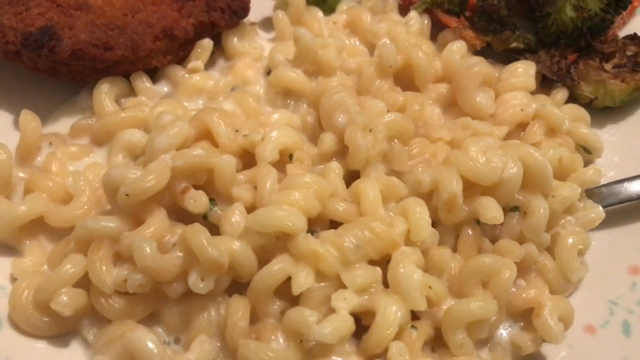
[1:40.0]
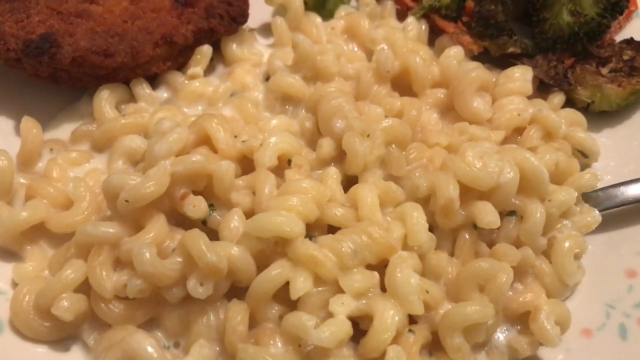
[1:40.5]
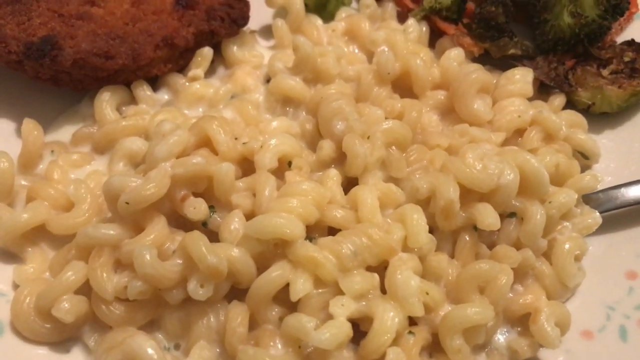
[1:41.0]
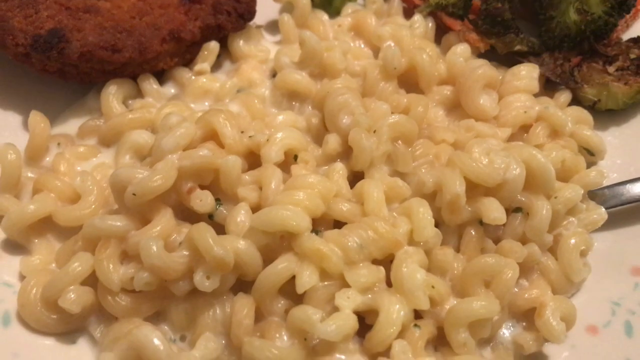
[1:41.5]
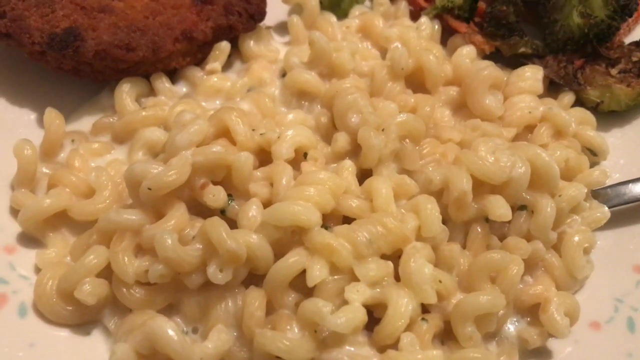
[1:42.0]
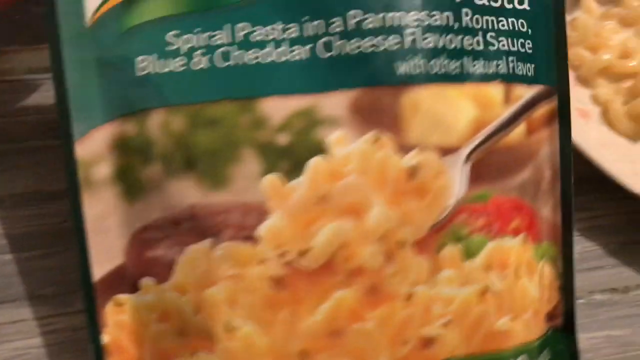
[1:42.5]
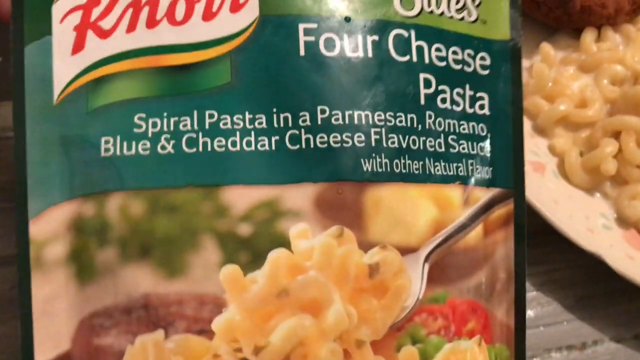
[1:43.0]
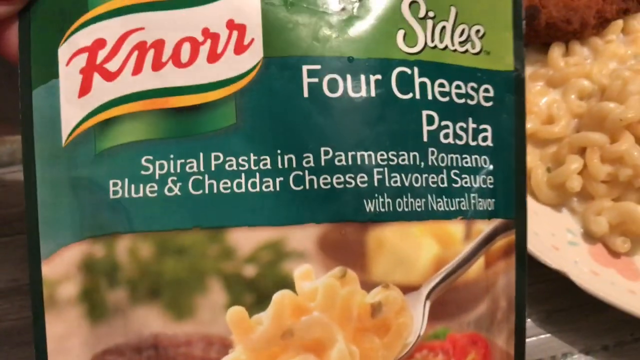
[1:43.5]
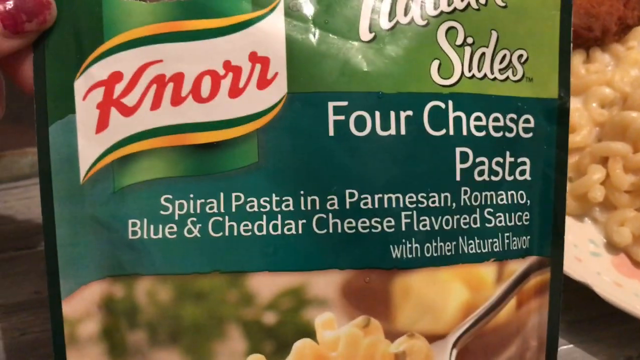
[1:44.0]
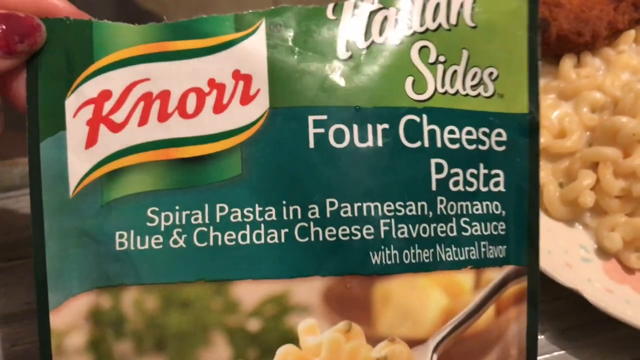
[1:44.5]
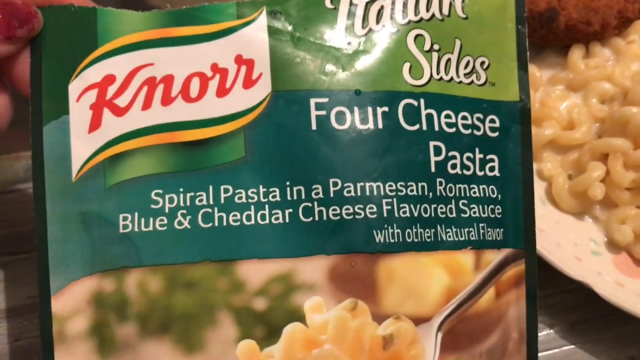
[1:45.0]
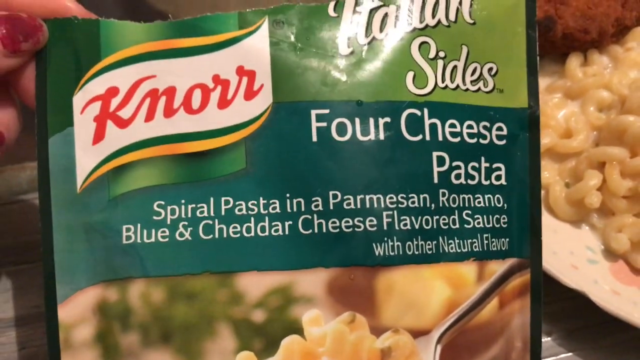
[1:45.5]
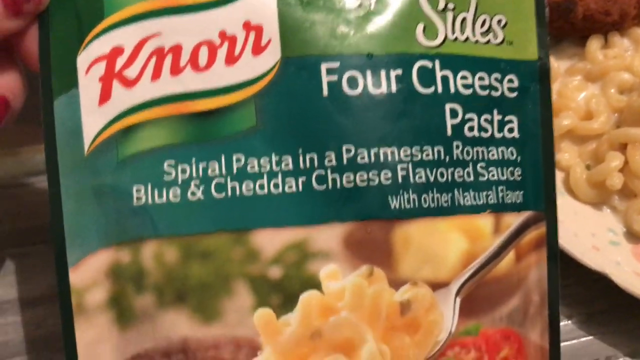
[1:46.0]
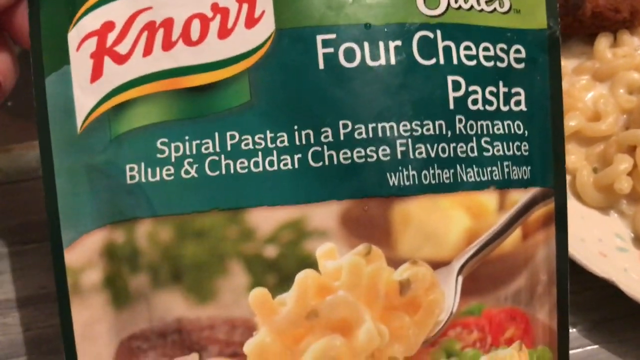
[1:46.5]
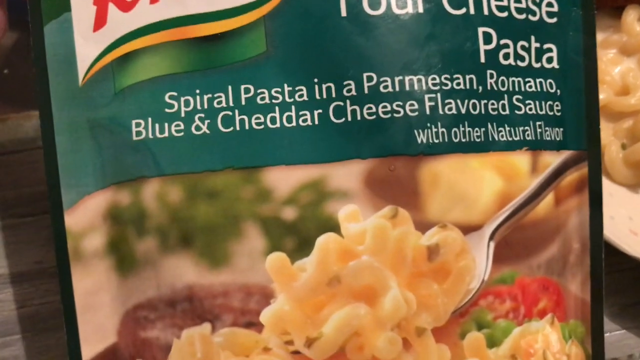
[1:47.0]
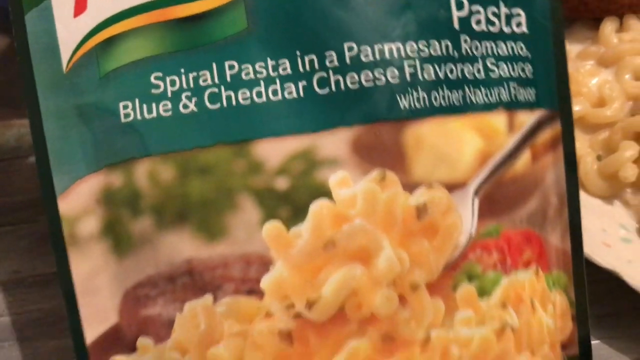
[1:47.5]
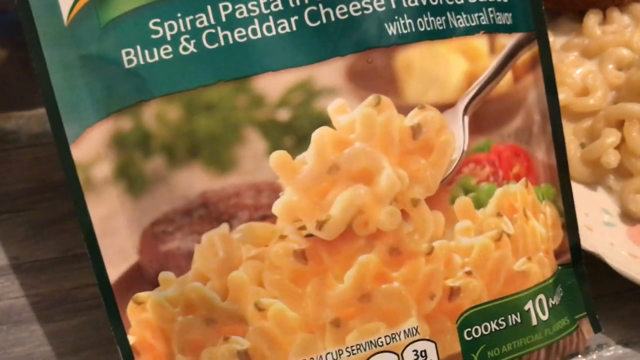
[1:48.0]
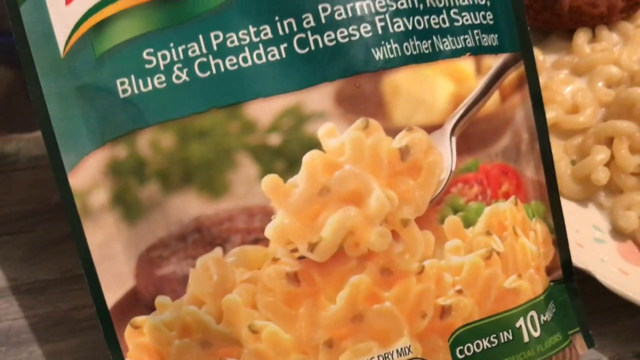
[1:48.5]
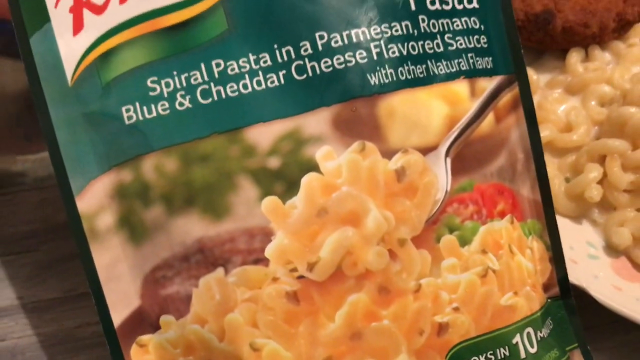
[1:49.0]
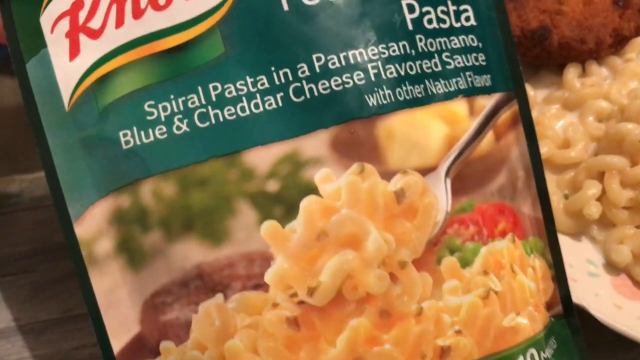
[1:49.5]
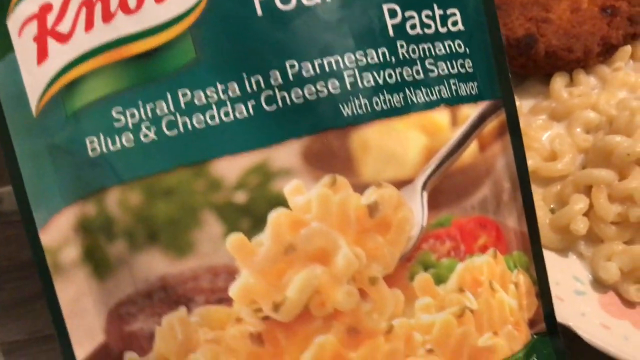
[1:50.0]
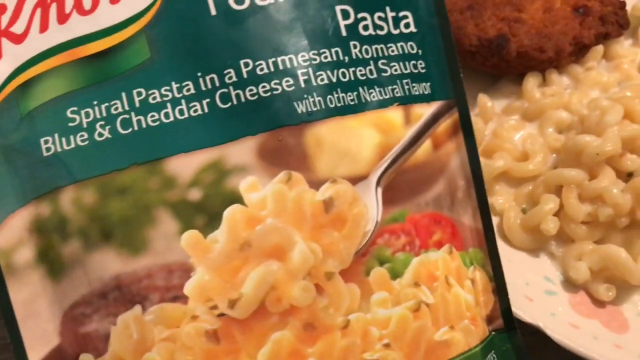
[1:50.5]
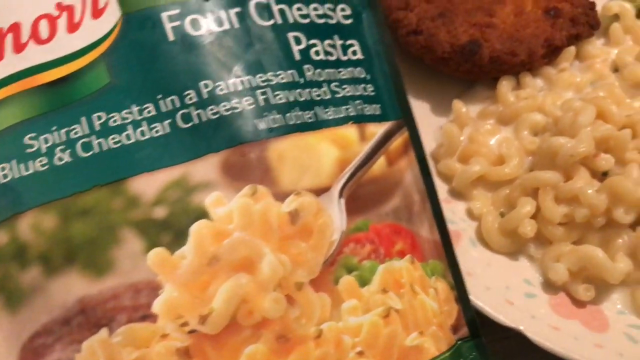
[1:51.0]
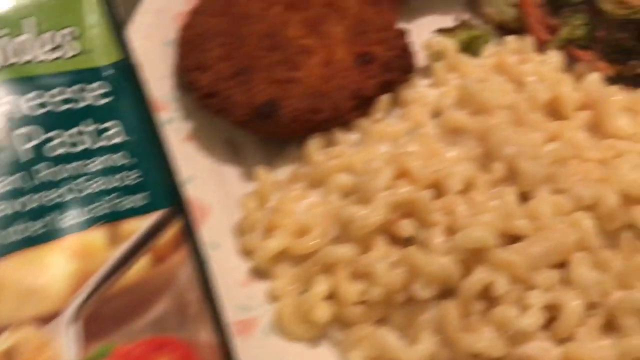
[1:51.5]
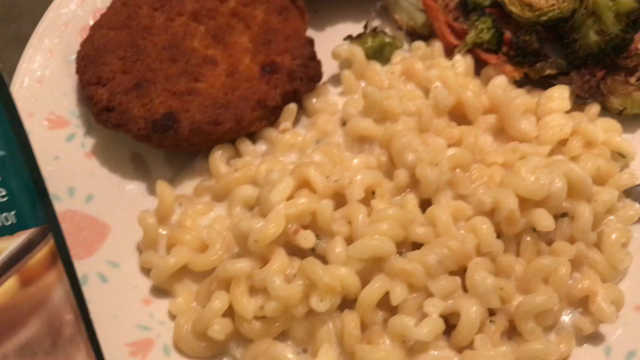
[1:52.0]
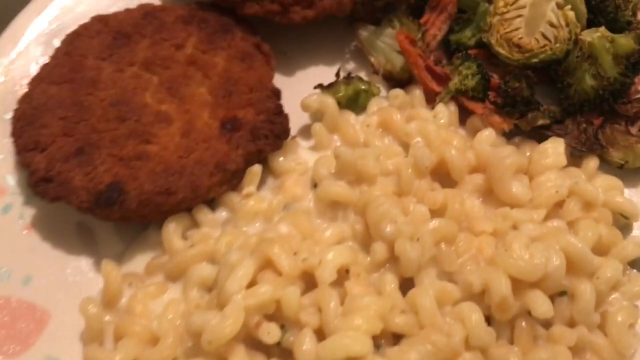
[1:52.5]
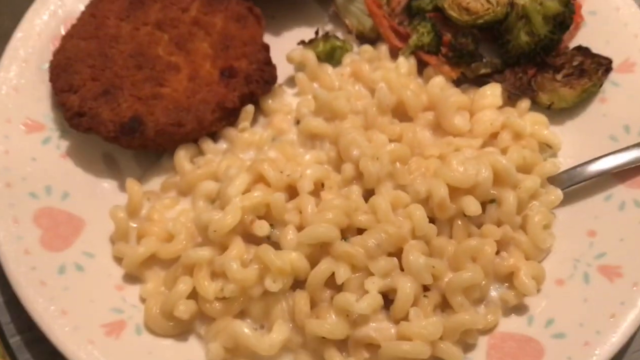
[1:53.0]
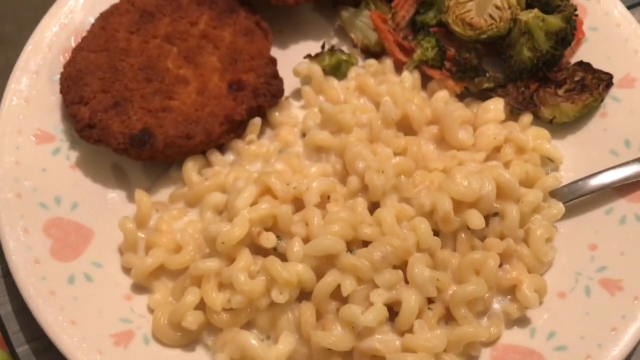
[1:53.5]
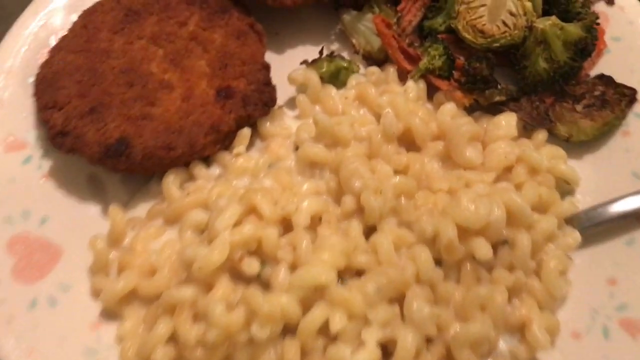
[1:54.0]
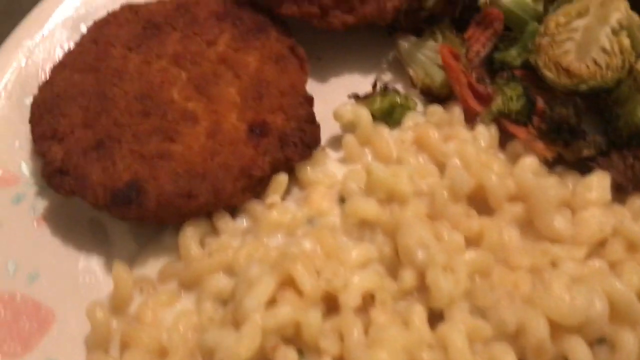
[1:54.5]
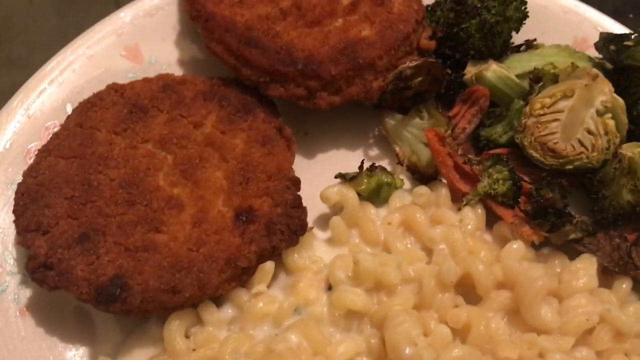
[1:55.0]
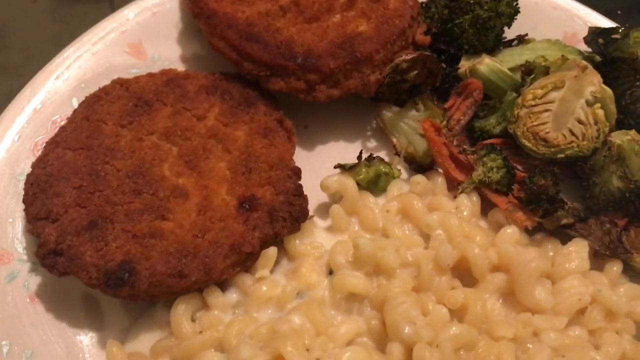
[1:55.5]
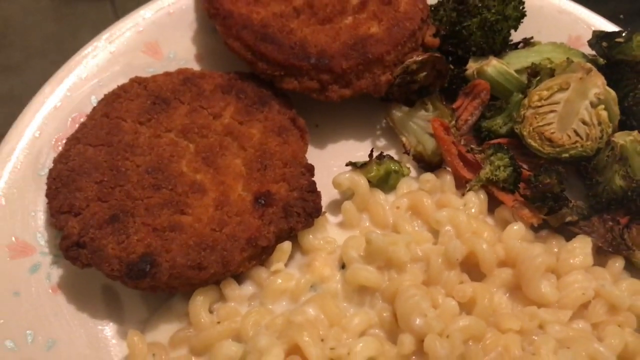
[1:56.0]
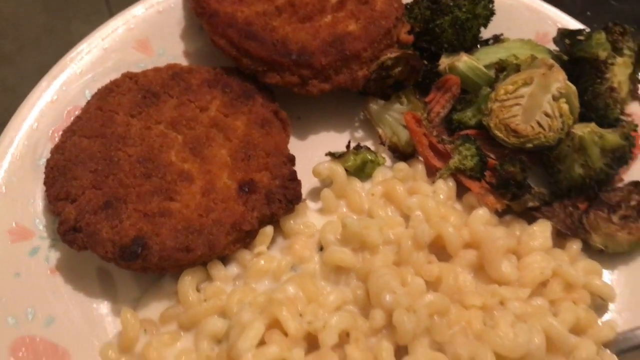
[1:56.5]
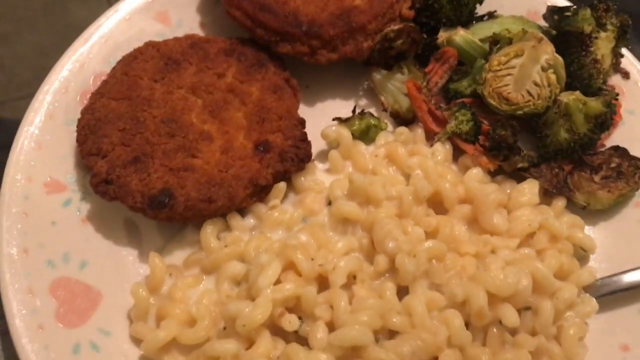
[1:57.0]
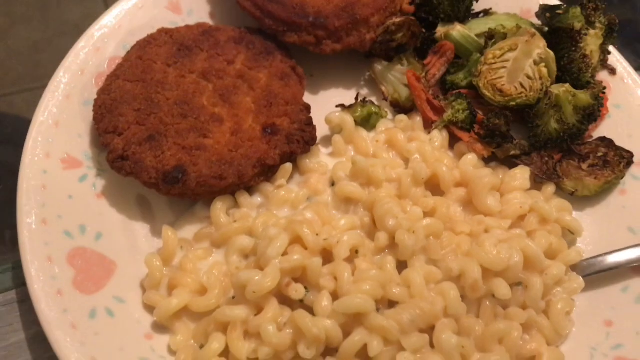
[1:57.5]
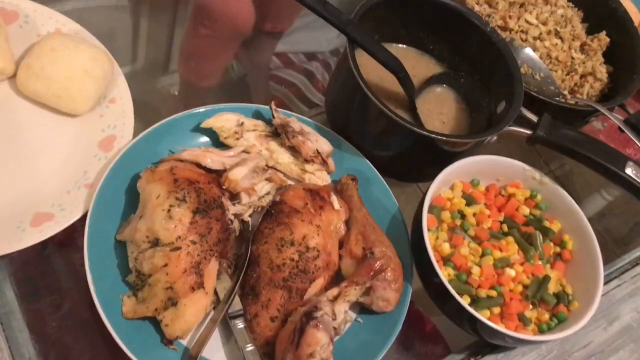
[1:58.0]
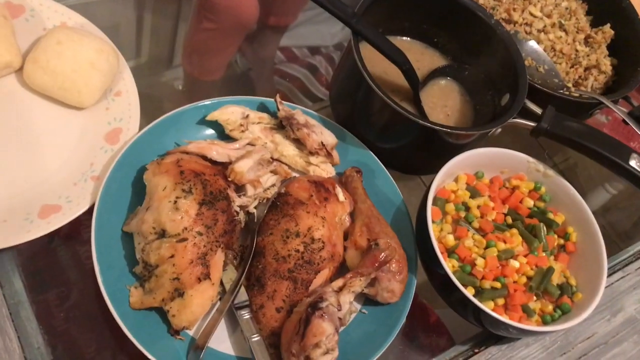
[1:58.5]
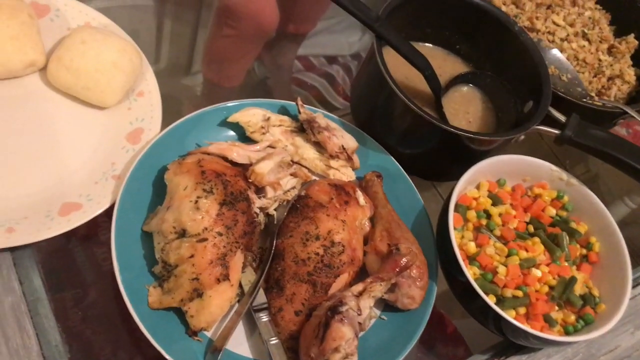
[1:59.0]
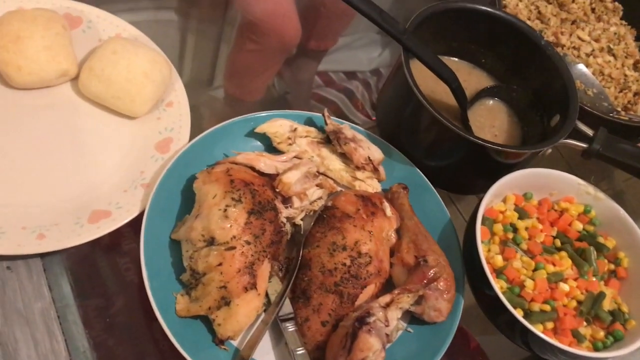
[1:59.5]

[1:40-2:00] The person recording briefly shows the pasta in white sauce on the plate before the camera pans up to reveal that it is not technically macaroni but Knorr brand Italian Sides cheese pasta. The description on the package says "spiral pasta in parmesan romano blue and cheddar cheese flavored sauce with natural flavor." The image on the bottom of the packaging shows pasta that looks very similar to the pasta on the plate. The plate is quickly showcased again before the screen changes to what looks to be the next meal: a white plate with pink hearts holding two dinner rolls, a teal plate with some sort of poultry, either chicken or turkey, a bowl of mixed vegetables with carrots, corn and green beans, a pot with what looks to be gravy inside and a black ladle in it, and, in the far right corner, another pot that seems to contain stuffing.